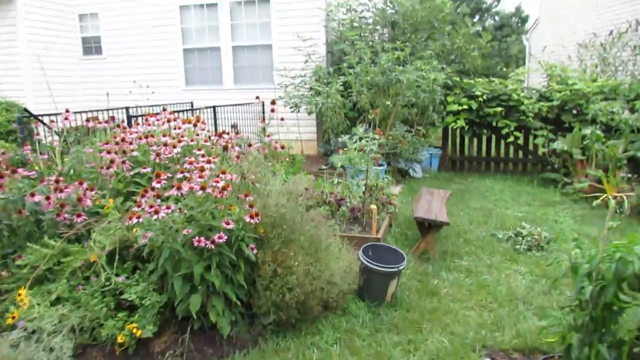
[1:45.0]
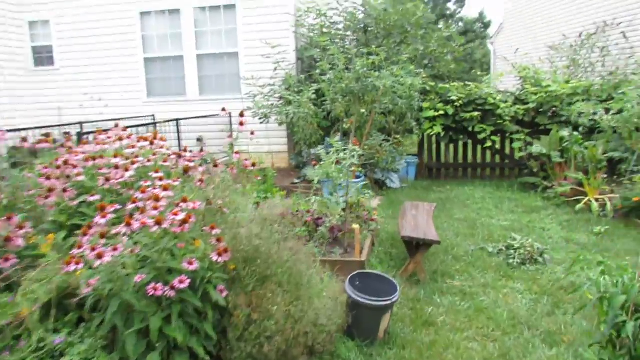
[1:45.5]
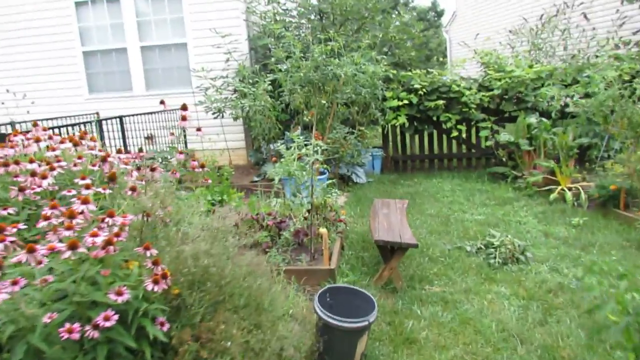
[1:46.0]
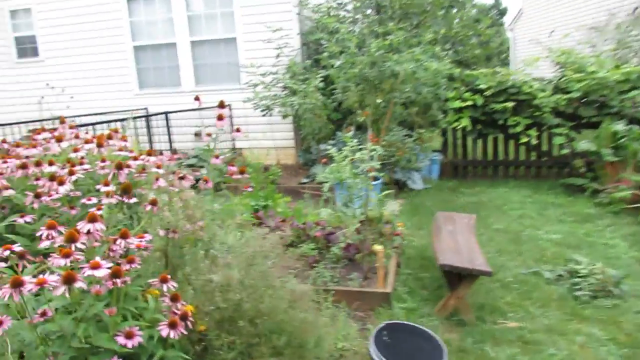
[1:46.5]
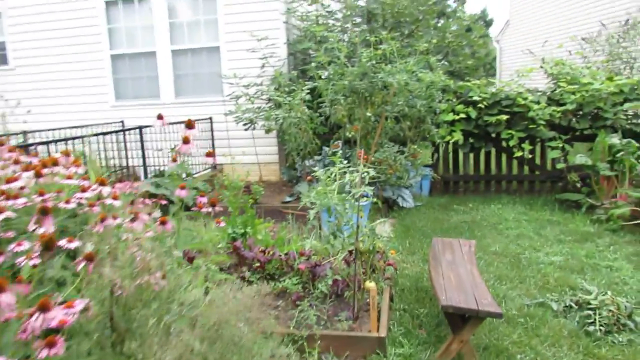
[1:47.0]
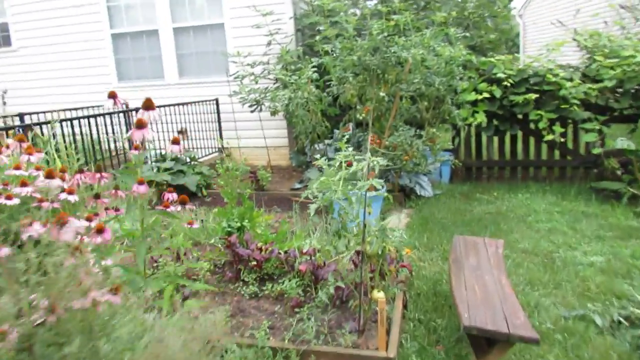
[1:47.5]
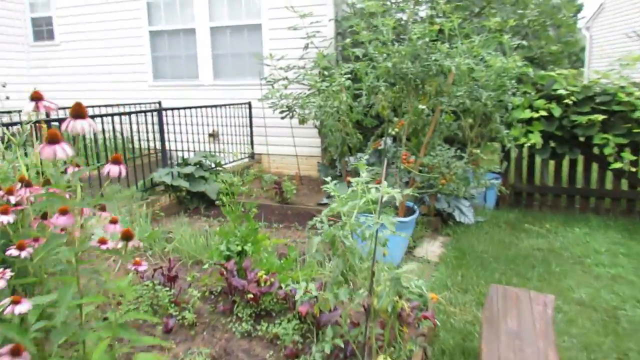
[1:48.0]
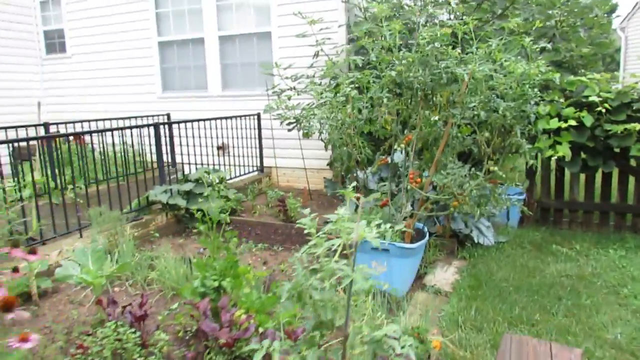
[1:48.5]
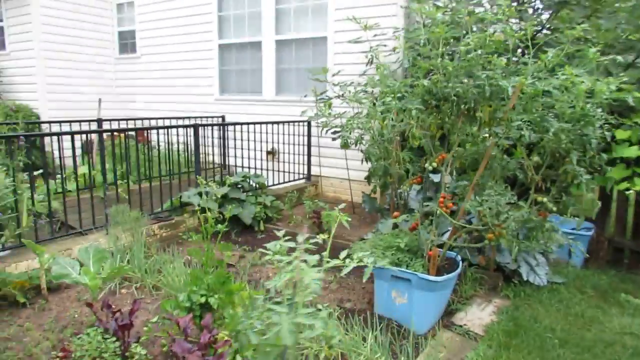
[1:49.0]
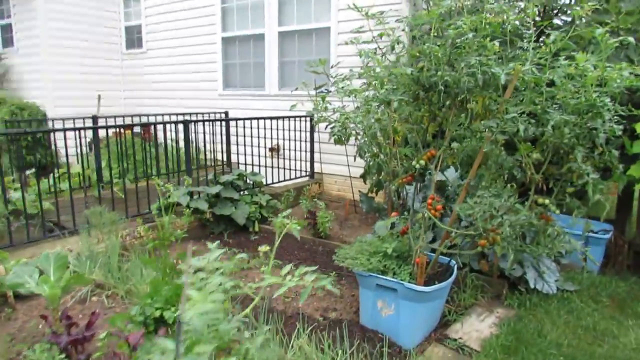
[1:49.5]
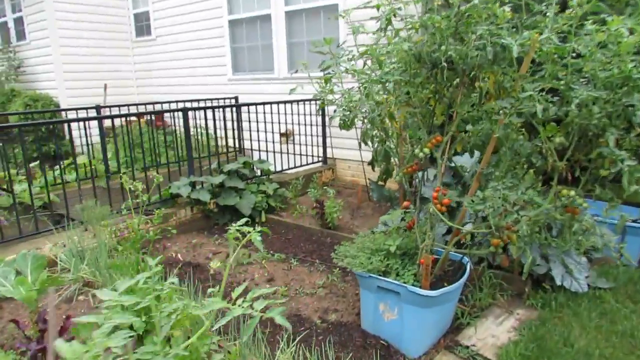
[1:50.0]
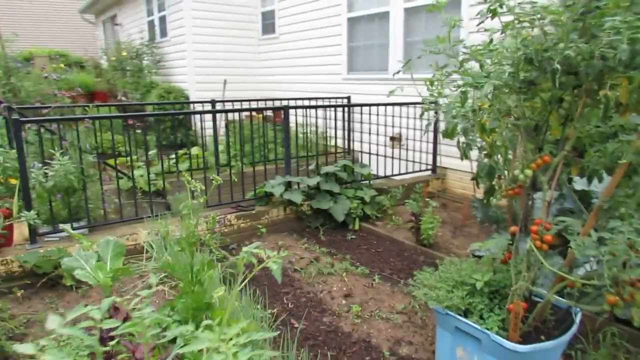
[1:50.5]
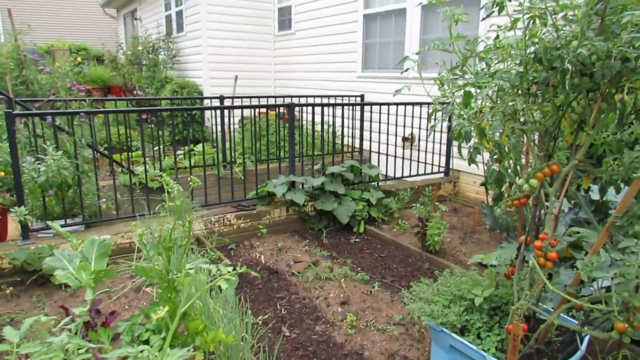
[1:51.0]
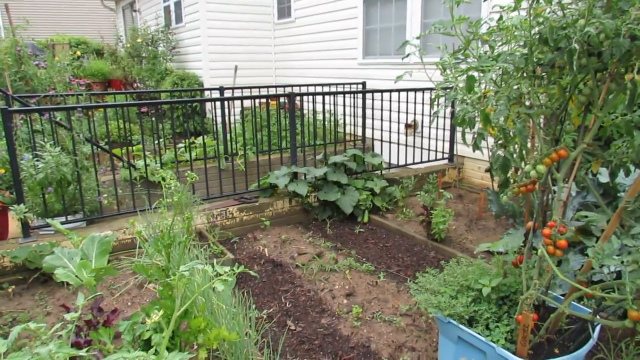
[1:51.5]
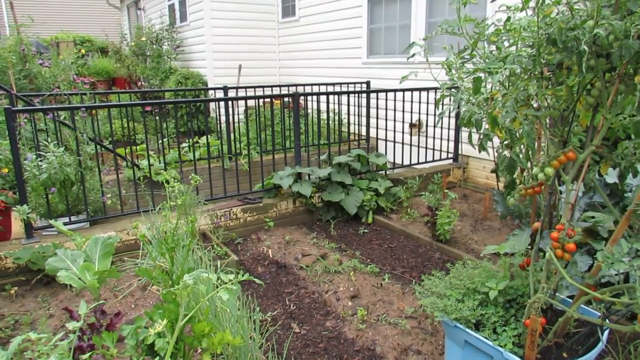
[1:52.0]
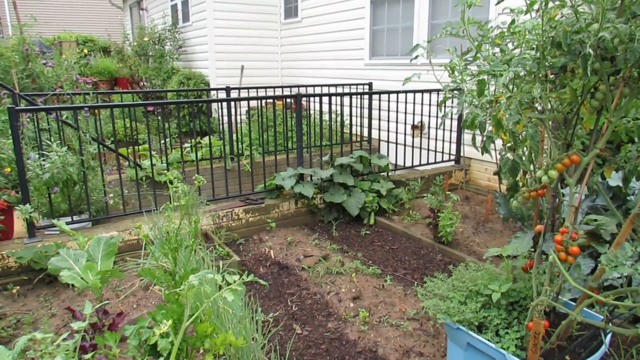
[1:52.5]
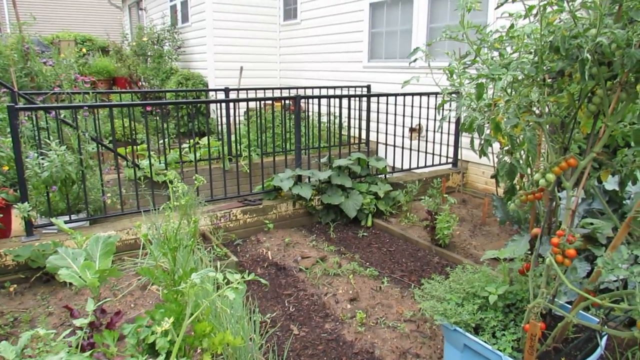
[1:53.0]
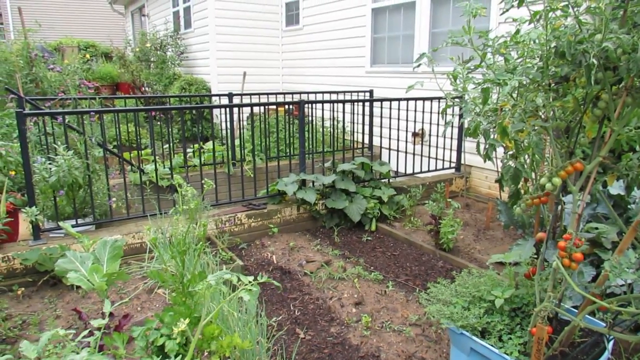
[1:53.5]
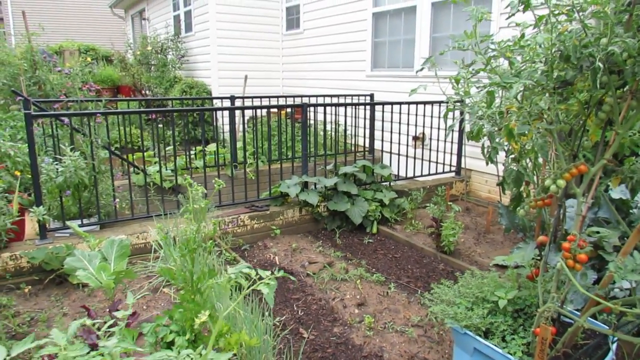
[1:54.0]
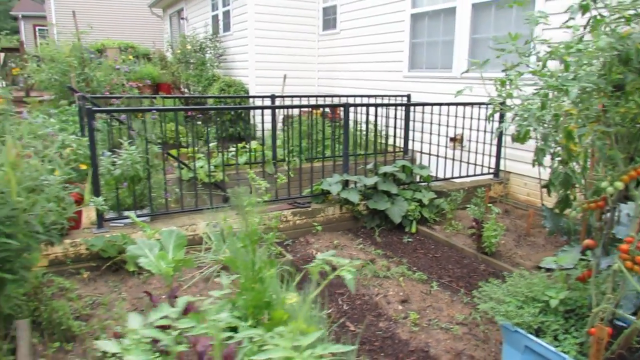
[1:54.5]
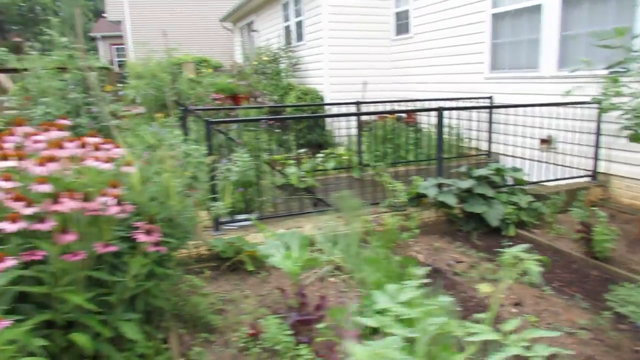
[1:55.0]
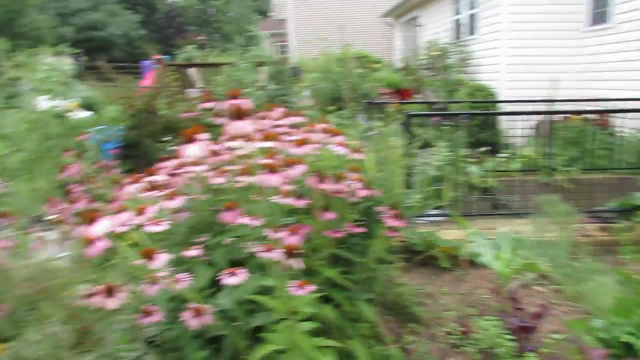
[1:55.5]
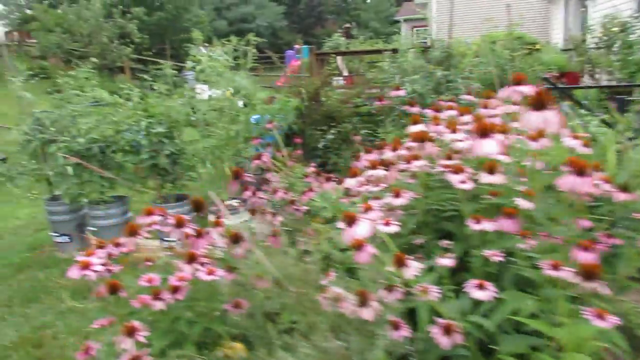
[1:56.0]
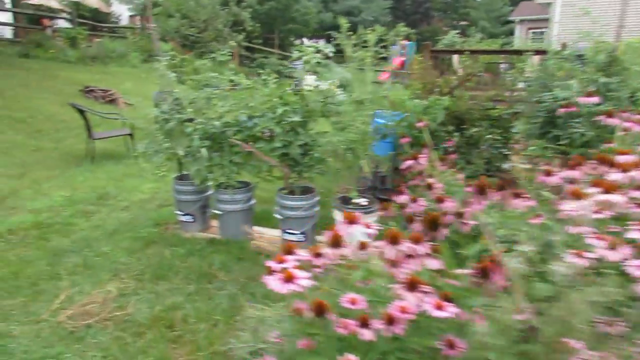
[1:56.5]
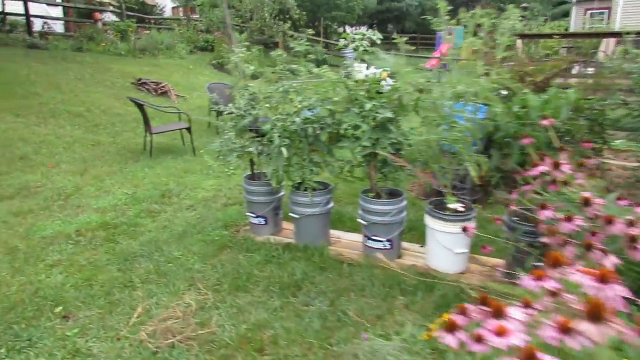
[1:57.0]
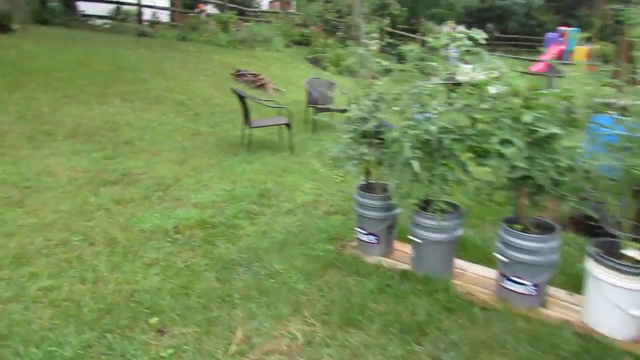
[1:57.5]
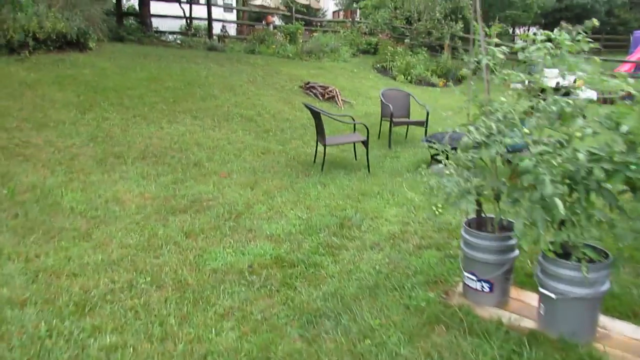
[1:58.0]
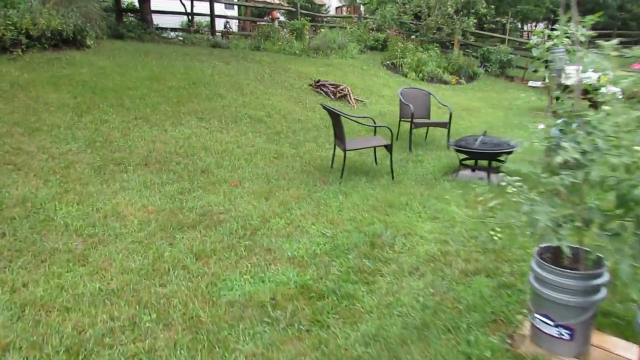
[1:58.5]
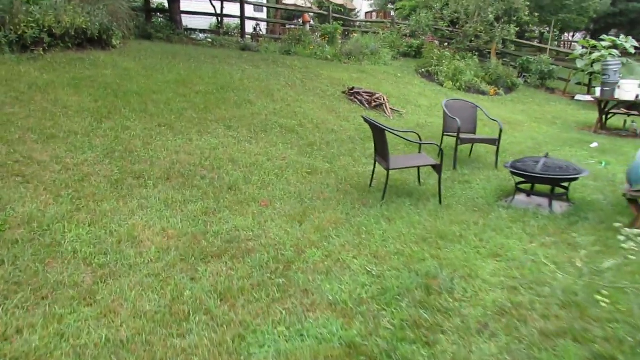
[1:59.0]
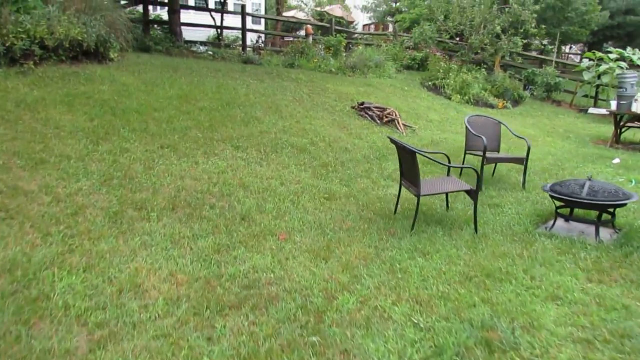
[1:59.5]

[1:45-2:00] The camera walks towards a group of plants, moving along the left side of the frame where pinkish, purplish flowers are in bloom. There is a black pot on the ground, an old wooden bench, more planter boxes, and a blue plastic tub with a tomato plant inside, the tree growing up from the dirt in the blue bin with tomatoes on it. Hints of another blue tub with plants growing in it are visible. In the background is some kind of wrought iron railing that looks like the sides of a staircase leading down, possibly to the basement or cellar of the house. The house is white and planked, with windows with molding. The camera then goes to the left, showing two chairs around a freestanding wrought iron fire pit whose top is a mesh screen in the shape of a lid that can be lifted off. A pile of logs or some kind of wood is in the background. There is a lot of green grass, the yard stretches on for a while, and a play structure is in the background.